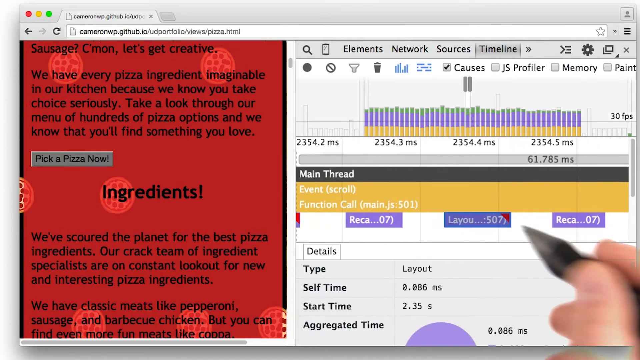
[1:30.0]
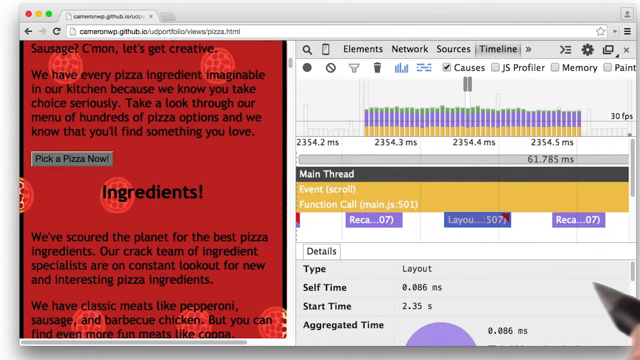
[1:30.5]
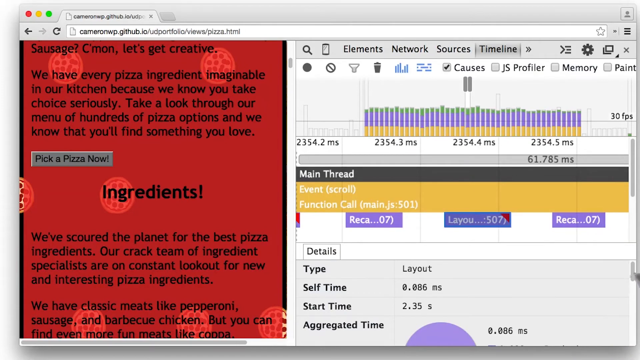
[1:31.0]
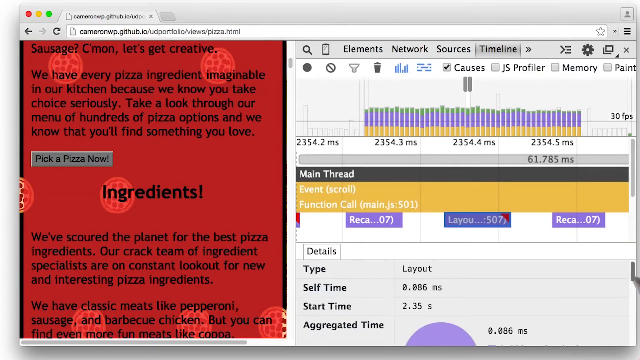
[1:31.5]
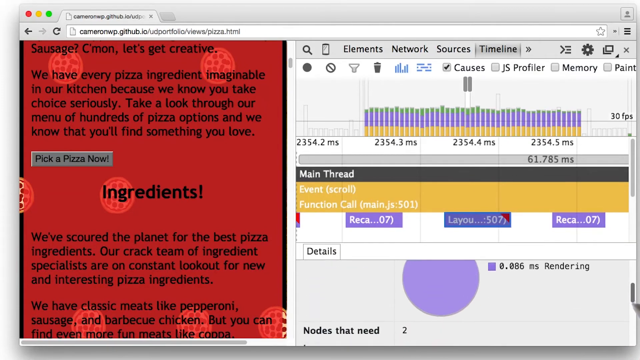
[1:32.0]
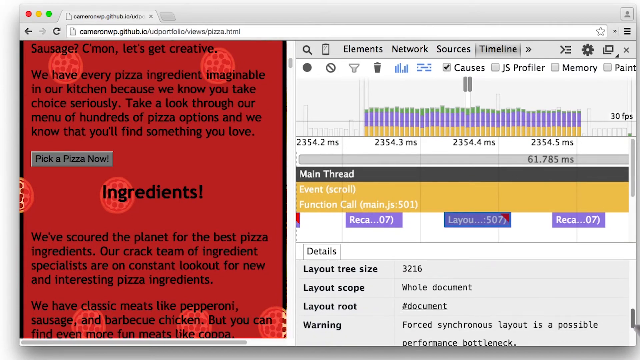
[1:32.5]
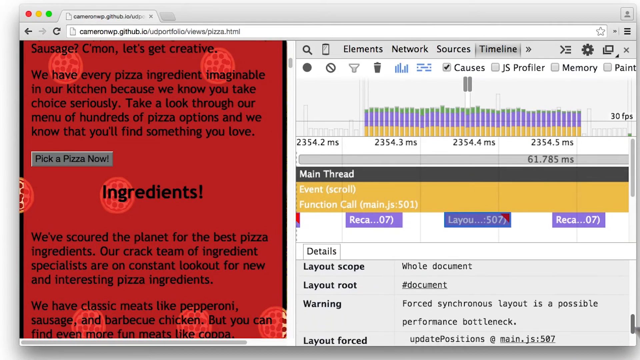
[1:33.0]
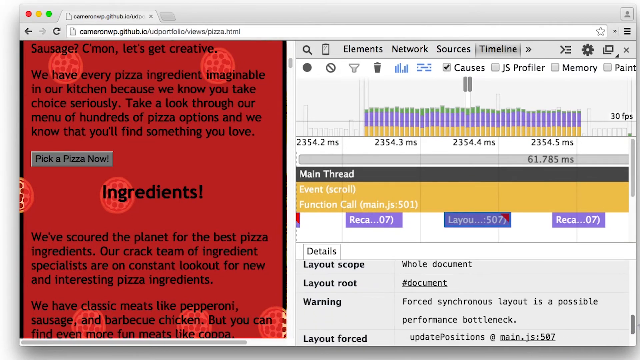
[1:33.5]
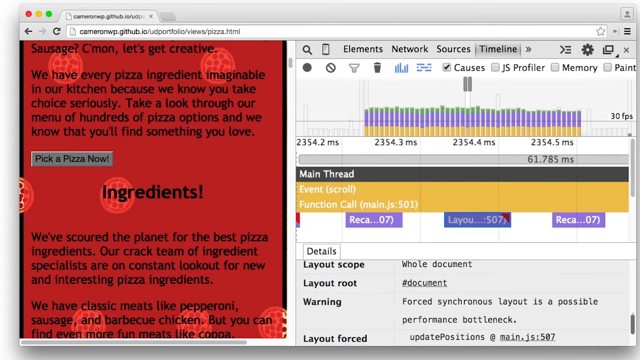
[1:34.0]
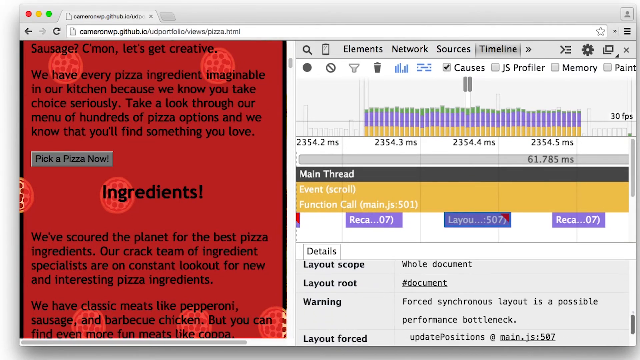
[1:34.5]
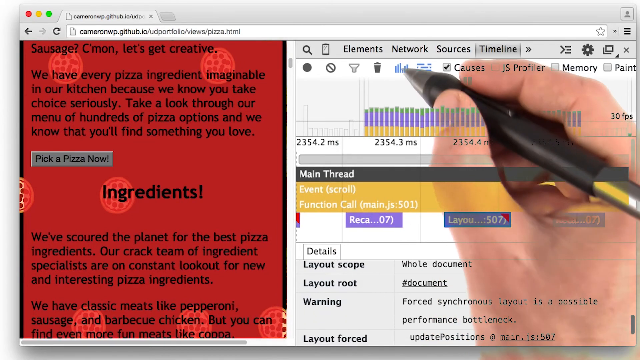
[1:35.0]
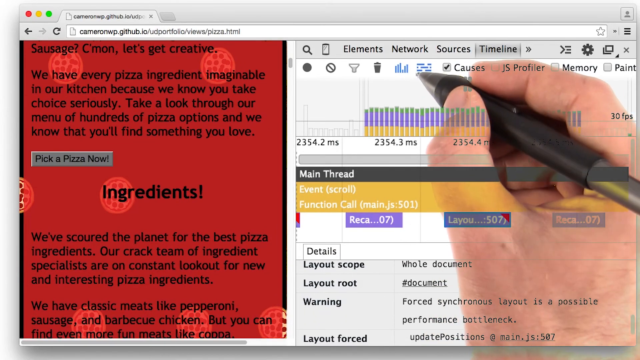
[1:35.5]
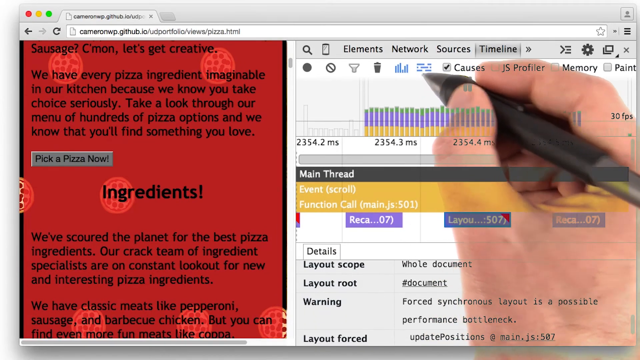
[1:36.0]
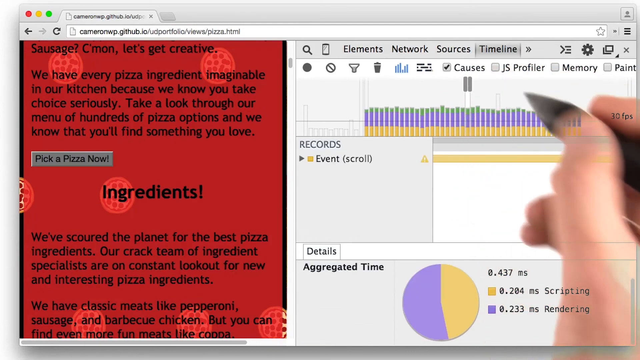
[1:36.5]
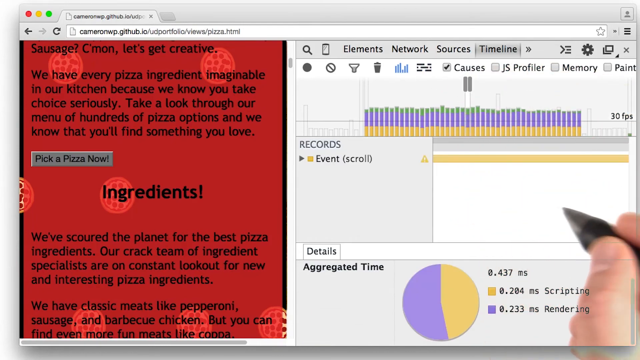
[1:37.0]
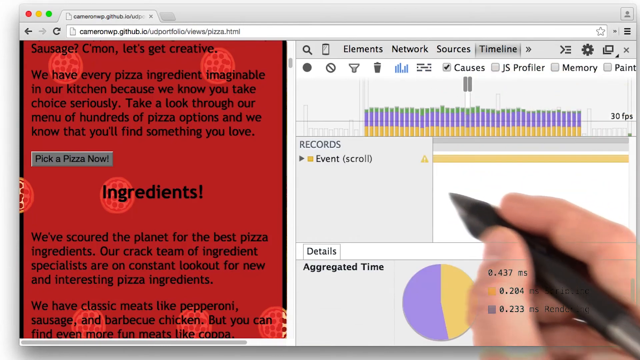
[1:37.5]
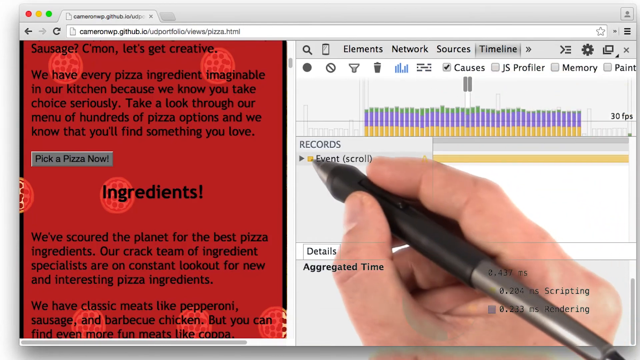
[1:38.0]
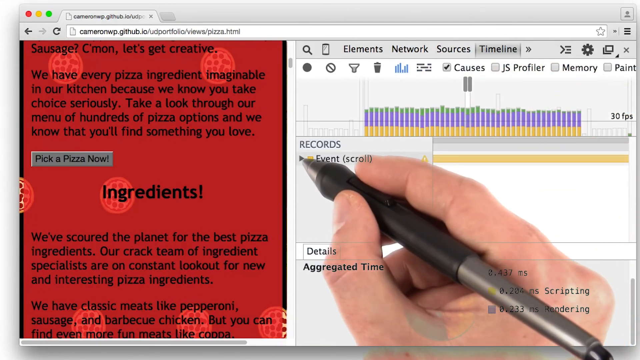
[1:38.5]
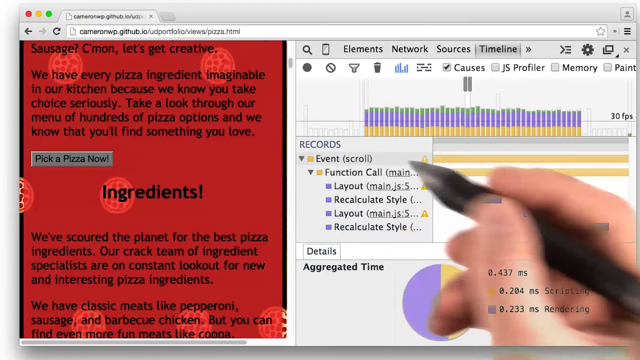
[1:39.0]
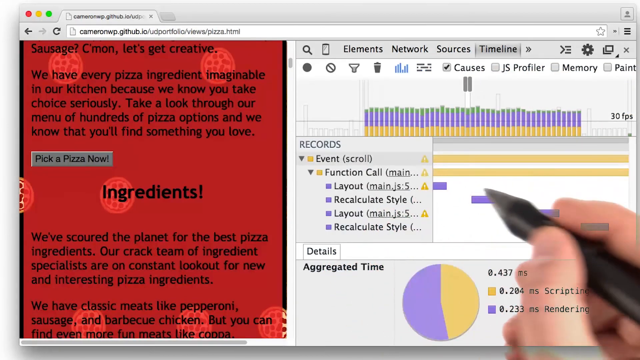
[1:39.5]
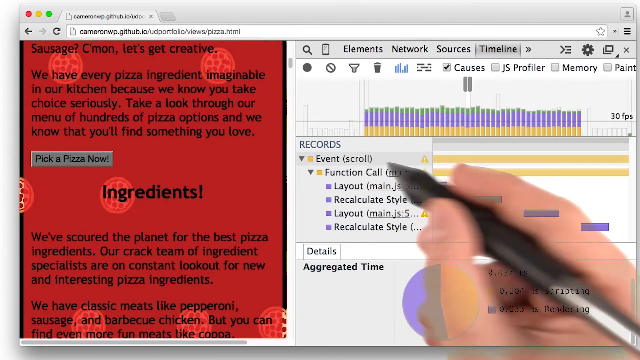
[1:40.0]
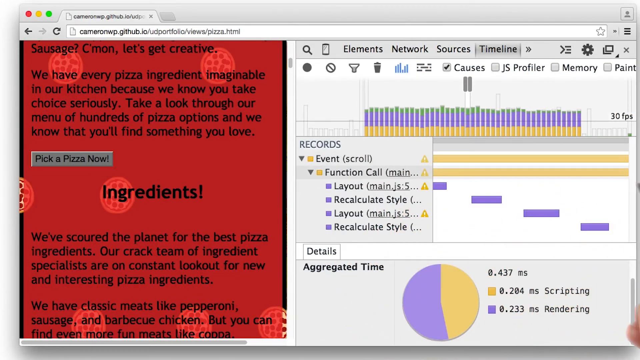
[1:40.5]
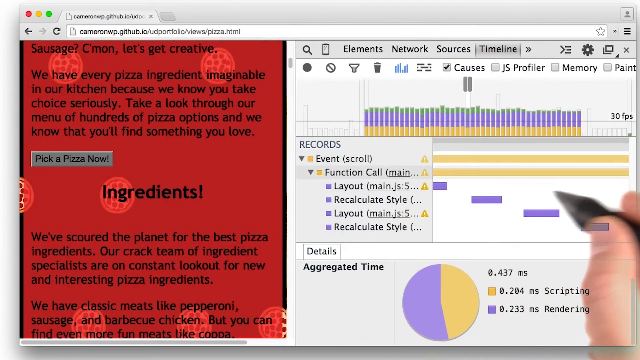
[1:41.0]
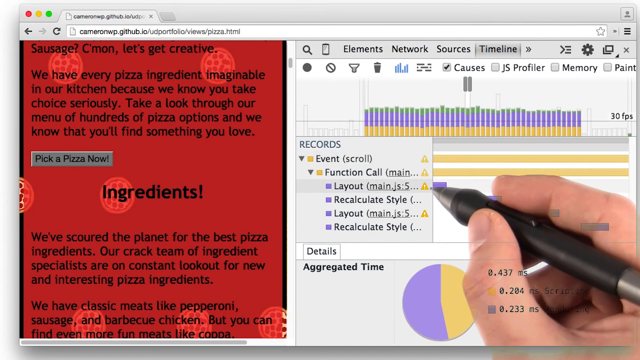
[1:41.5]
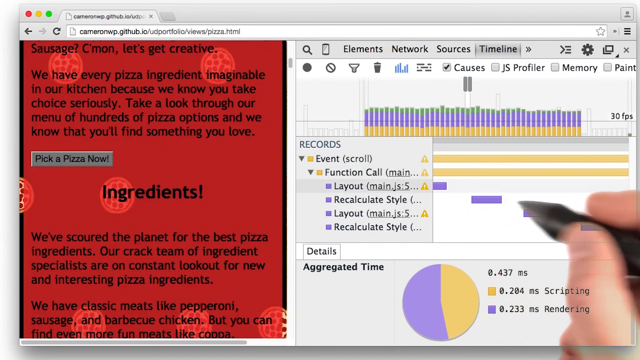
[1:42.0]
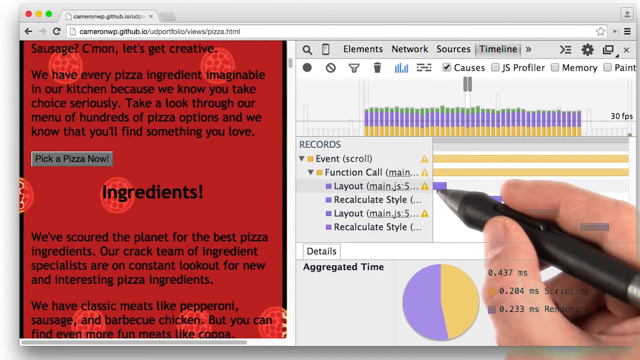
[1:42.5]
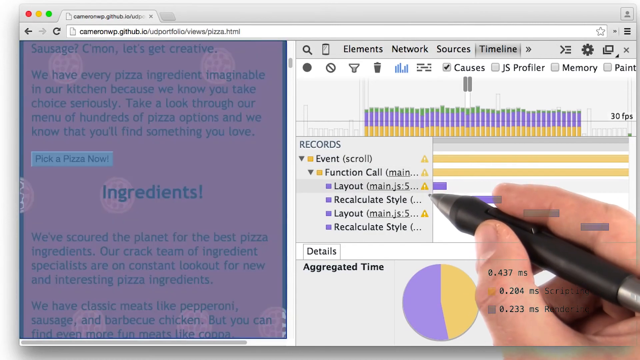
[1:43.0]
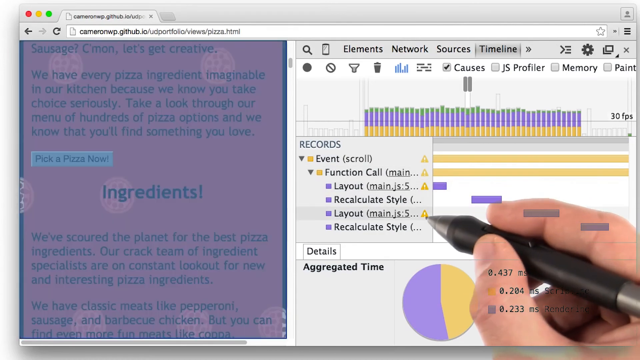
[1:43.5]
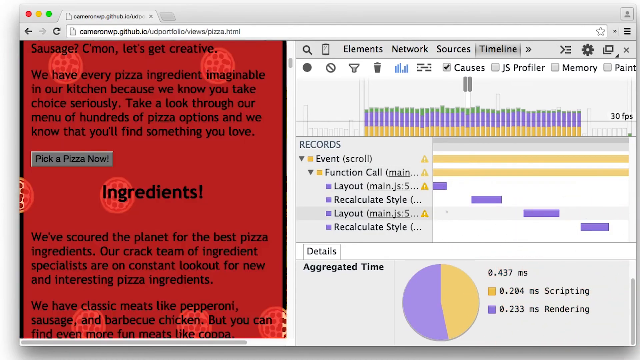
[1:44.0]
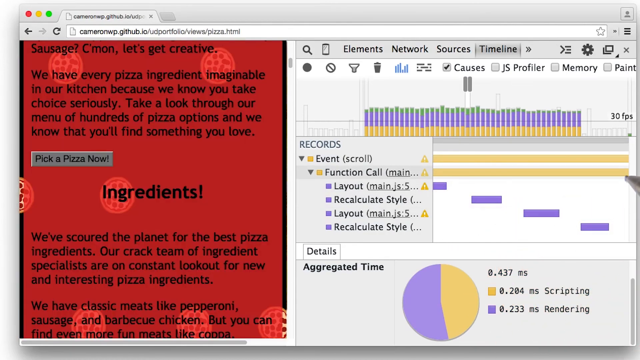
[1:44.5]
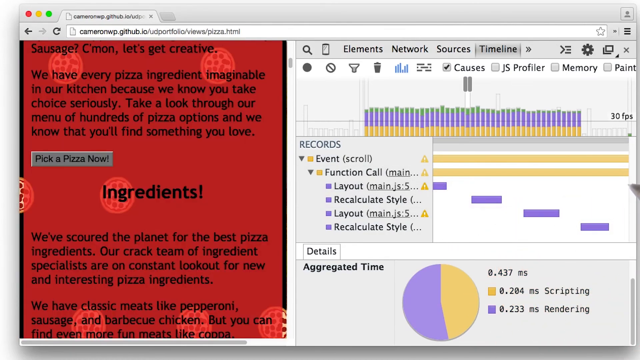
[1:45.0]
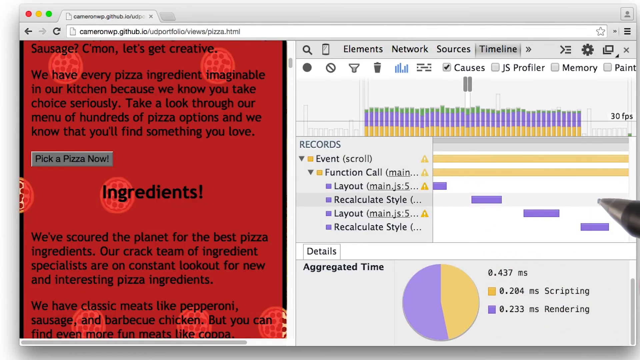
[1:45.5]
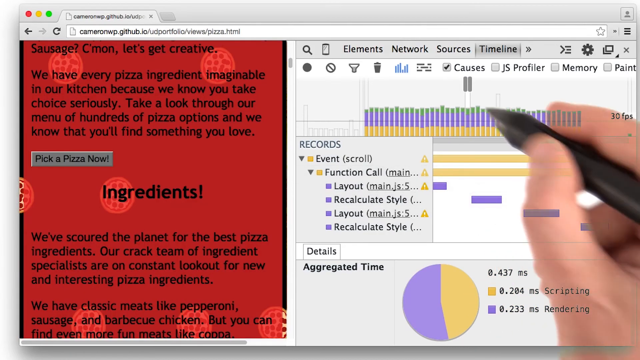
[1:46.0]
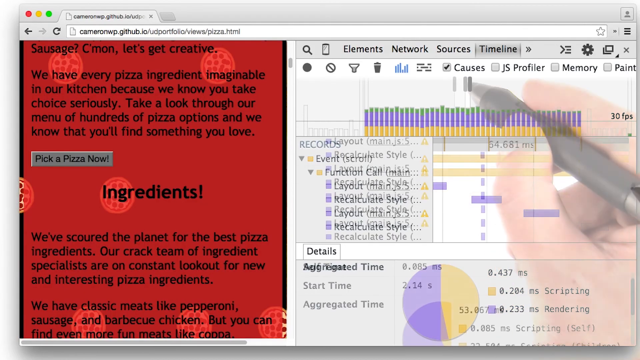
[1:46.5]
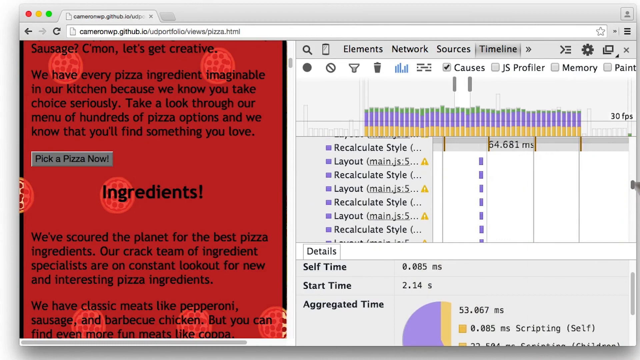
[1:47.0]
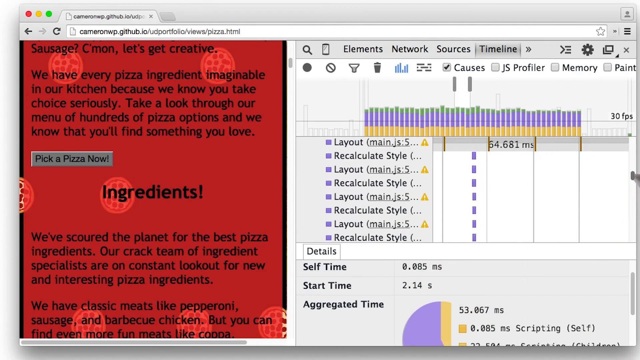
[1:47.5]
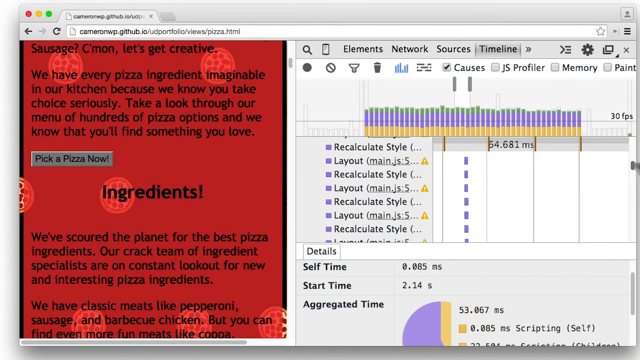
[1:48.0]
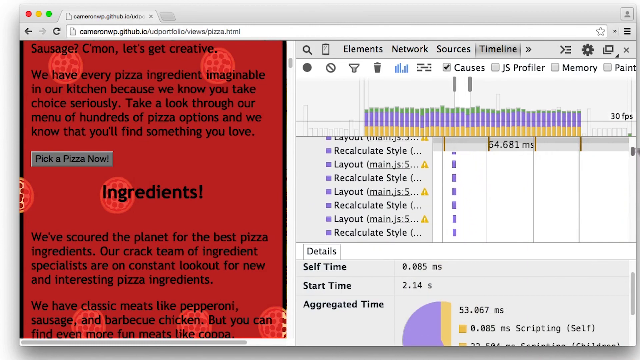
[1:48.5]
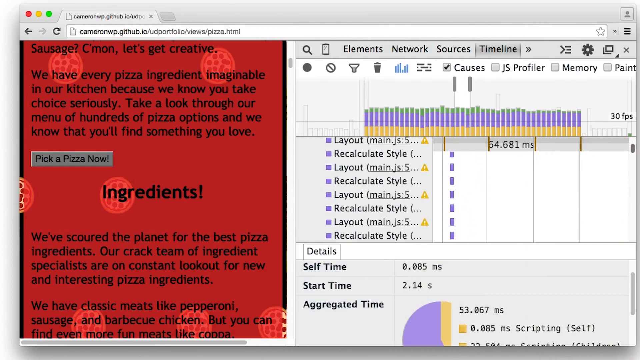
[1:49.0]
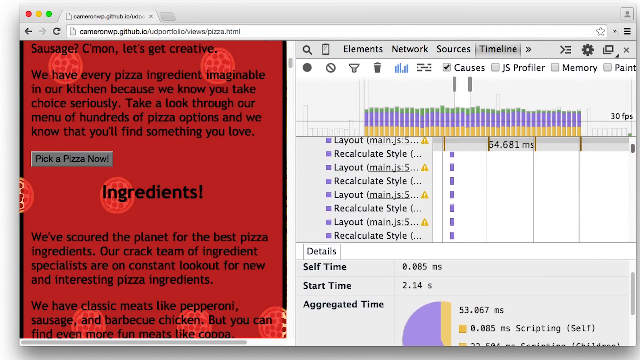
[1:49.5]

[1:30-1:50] After adjusting the main thread, the presenter goes to the very bottom of the screen and scrolls down, showing text: type, layout, self-time, start-time, aggregate-time, and at the very bottom, layout tree size, layout scope and layout root warning. He goes to the very top of the debugger, where, right next to the bar chart icon, there is an icon with horizontal lines. He clicks it, and a new screen loads with "records" in the middle. He clicks the first down arrow, which shows event function call, layout, recalculate style, layout, recalculate style, with horizontal bar charts for each row showing what happens over time. He then goes back and scrolls up to look at the different operations that occur over time.